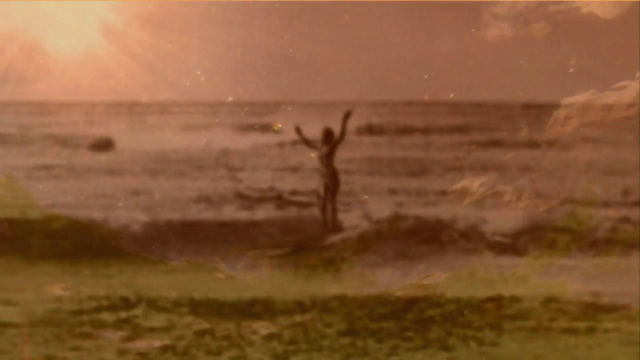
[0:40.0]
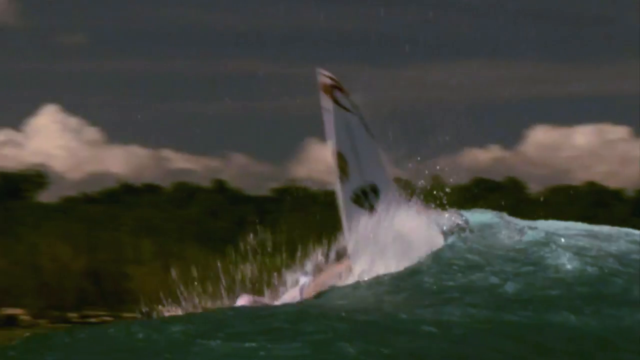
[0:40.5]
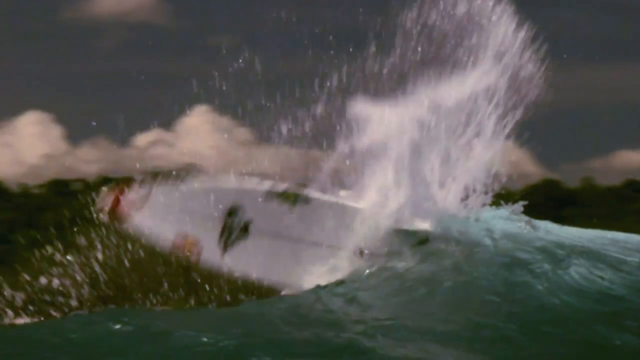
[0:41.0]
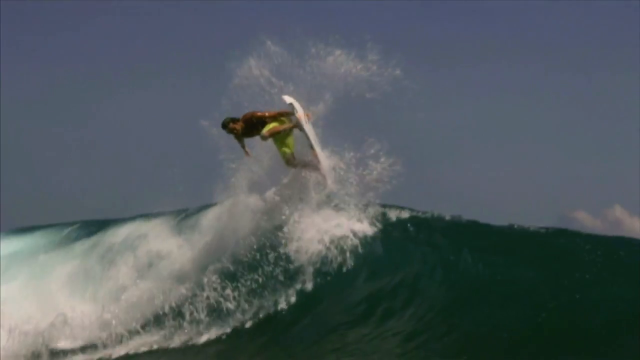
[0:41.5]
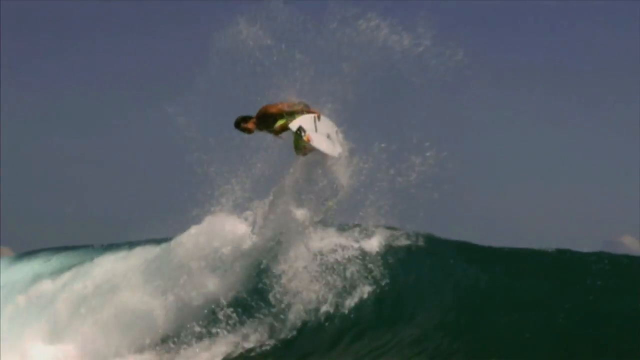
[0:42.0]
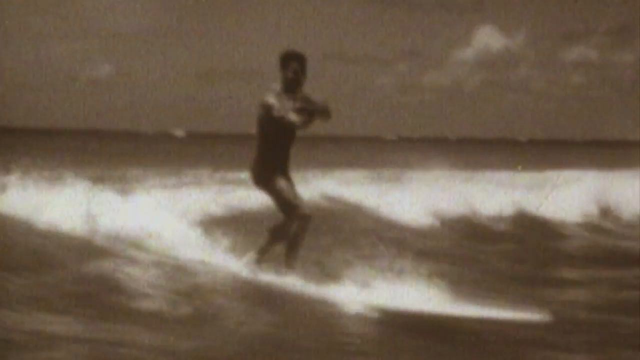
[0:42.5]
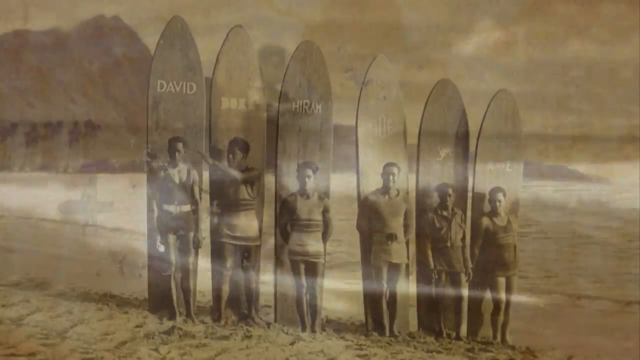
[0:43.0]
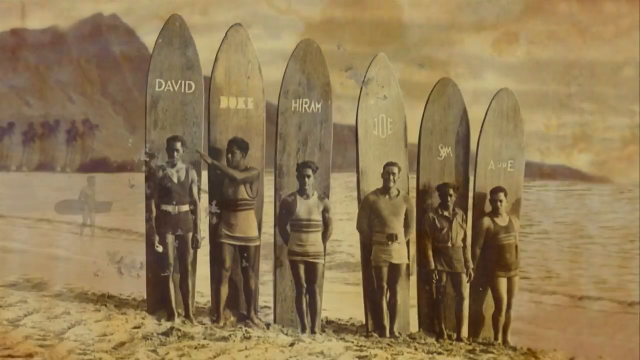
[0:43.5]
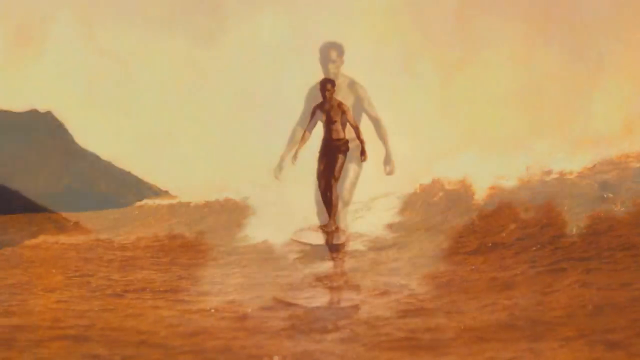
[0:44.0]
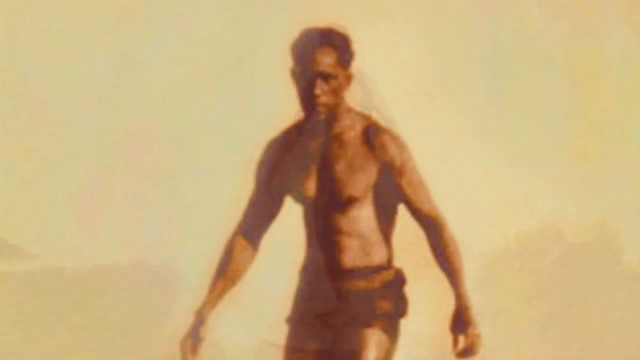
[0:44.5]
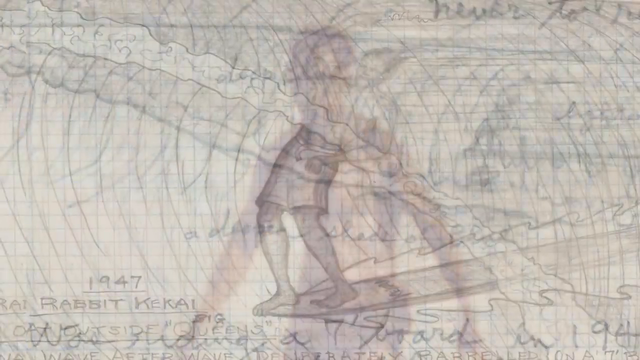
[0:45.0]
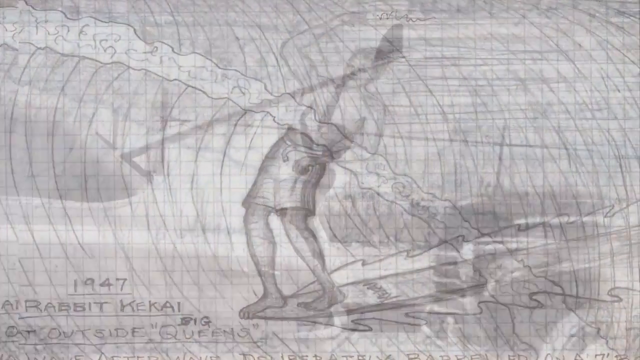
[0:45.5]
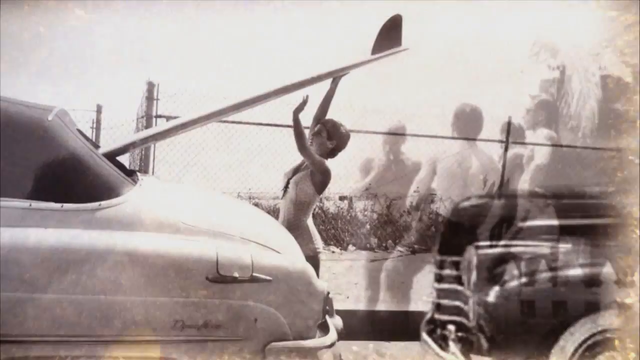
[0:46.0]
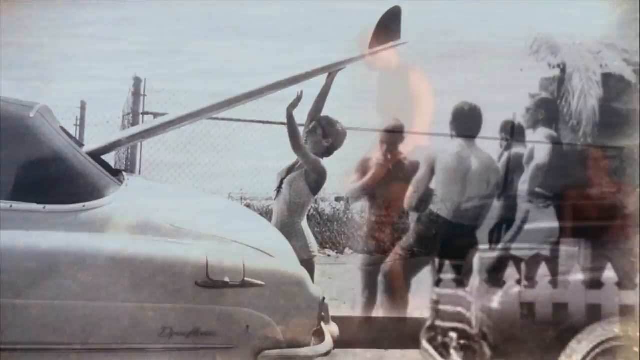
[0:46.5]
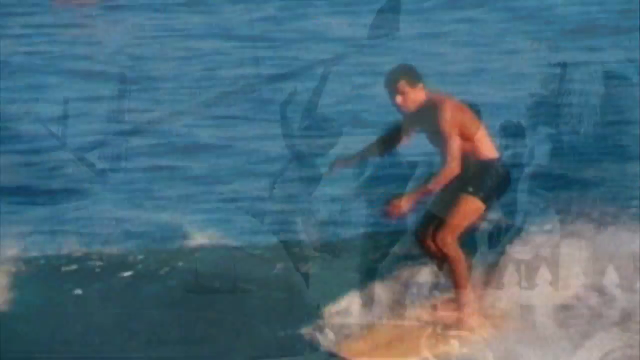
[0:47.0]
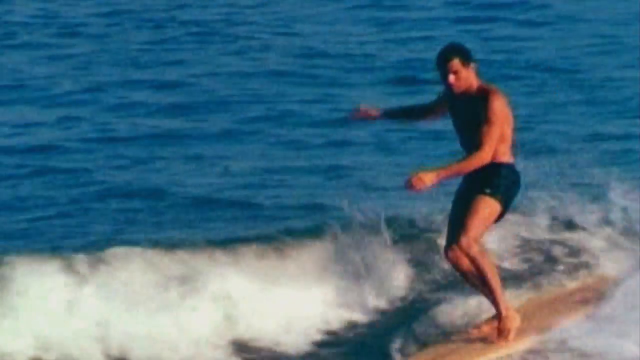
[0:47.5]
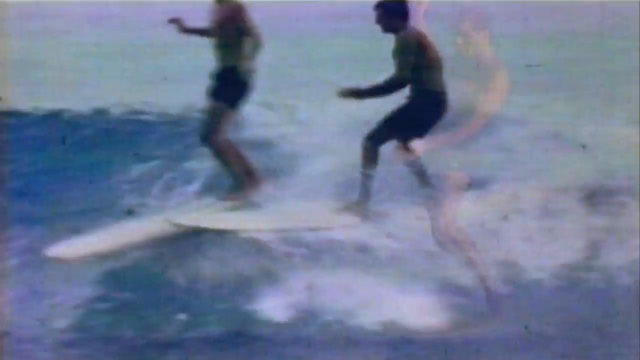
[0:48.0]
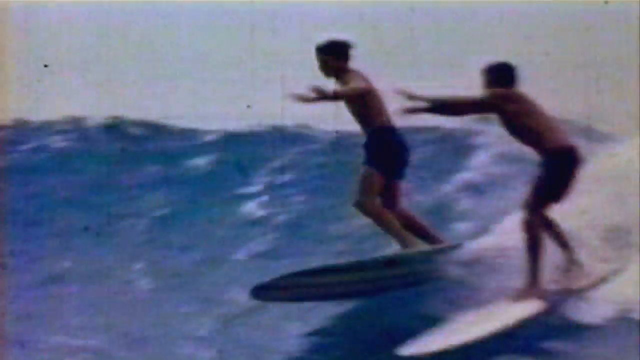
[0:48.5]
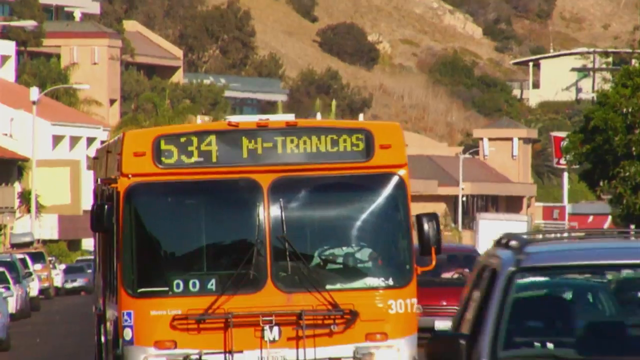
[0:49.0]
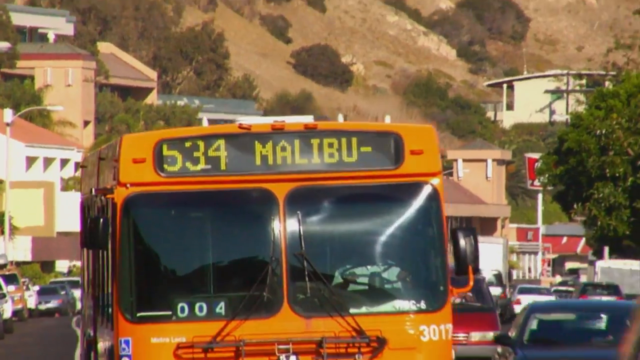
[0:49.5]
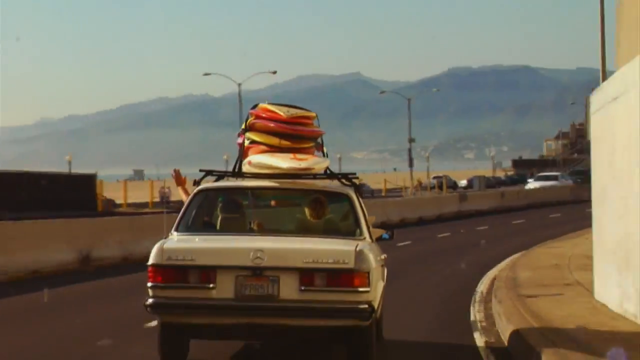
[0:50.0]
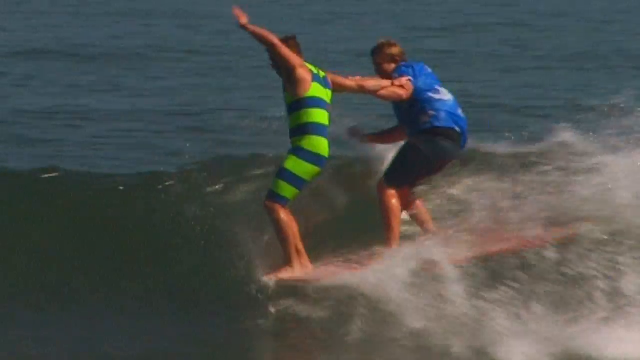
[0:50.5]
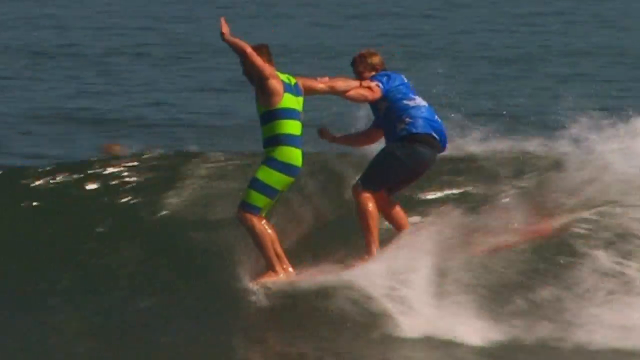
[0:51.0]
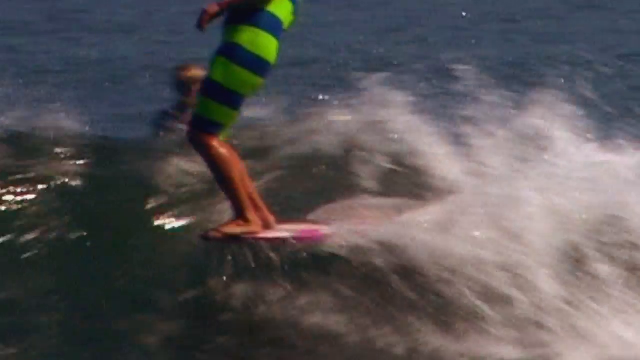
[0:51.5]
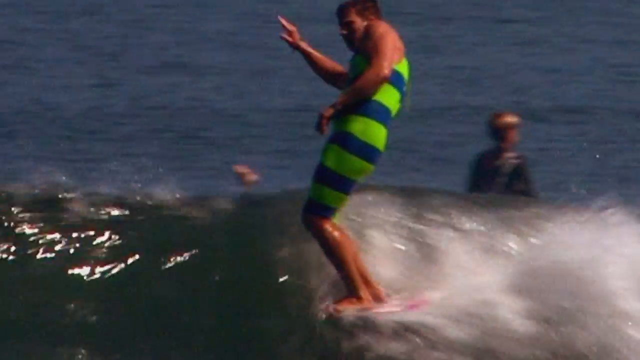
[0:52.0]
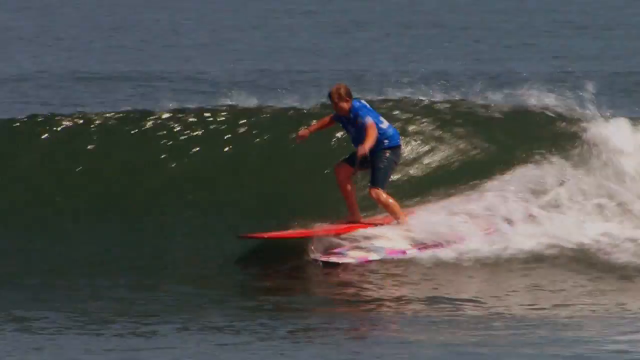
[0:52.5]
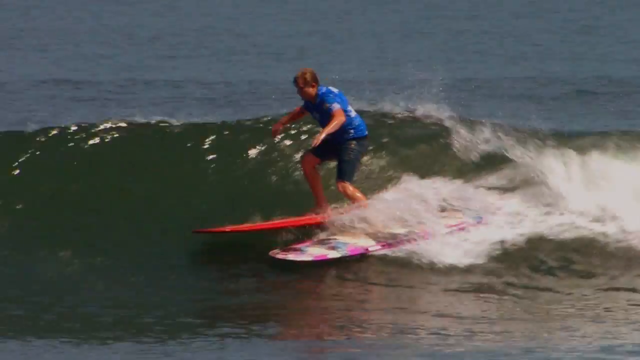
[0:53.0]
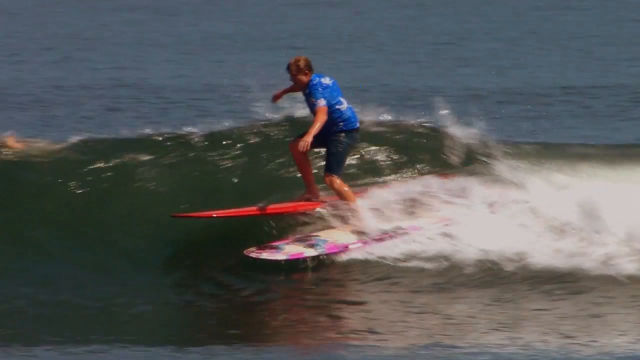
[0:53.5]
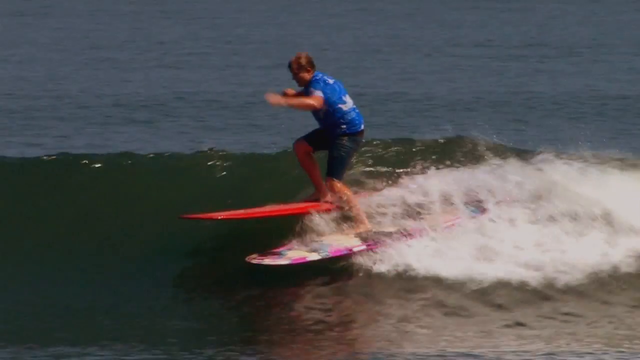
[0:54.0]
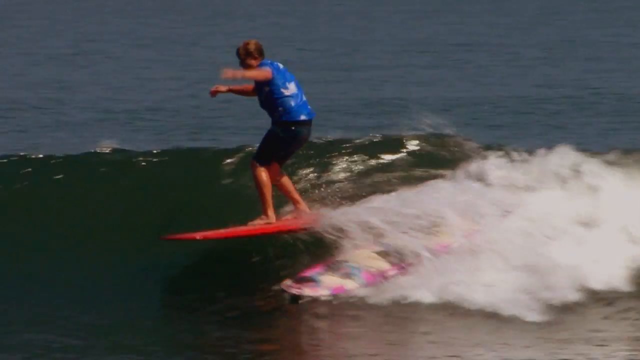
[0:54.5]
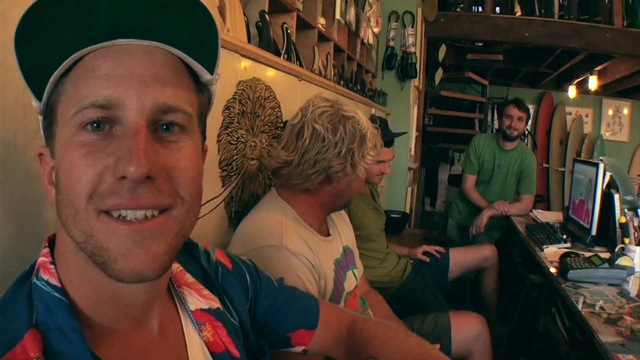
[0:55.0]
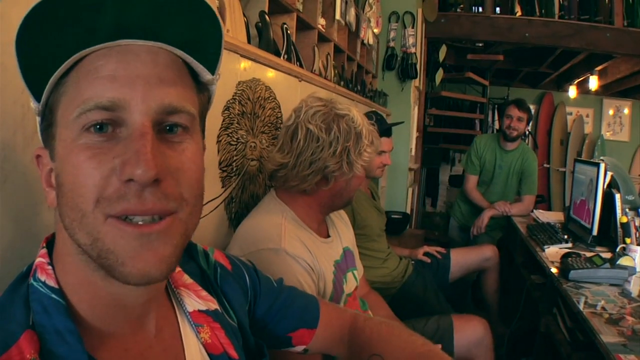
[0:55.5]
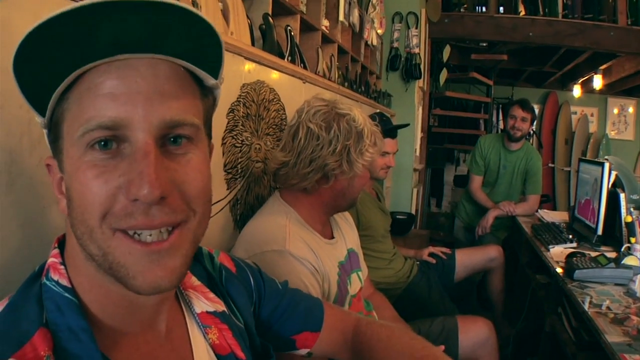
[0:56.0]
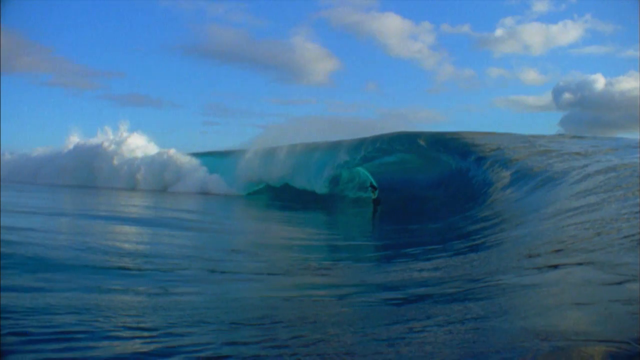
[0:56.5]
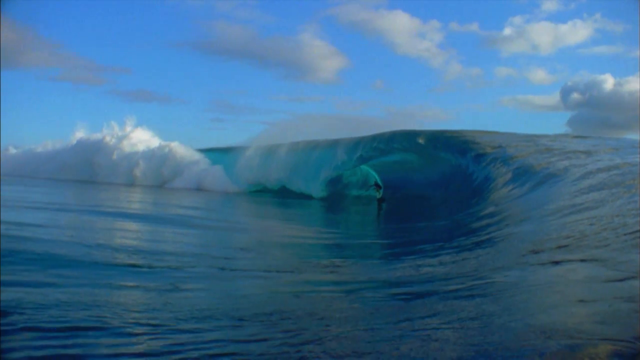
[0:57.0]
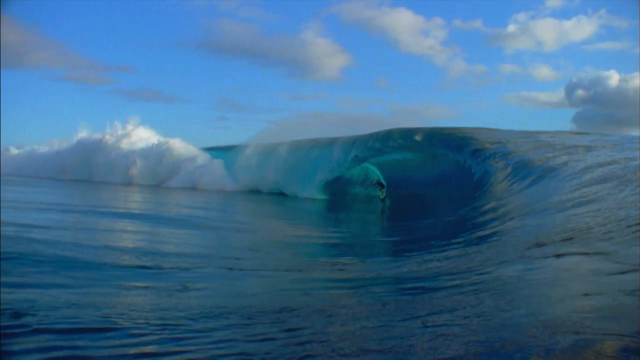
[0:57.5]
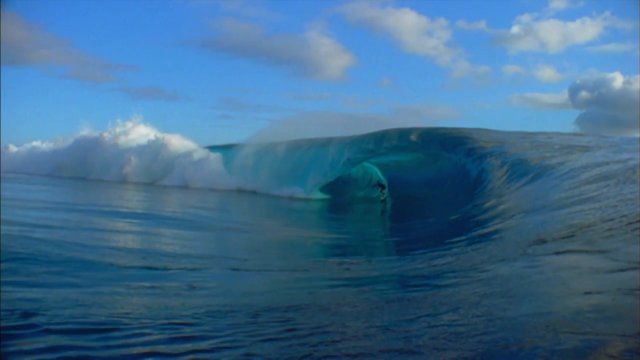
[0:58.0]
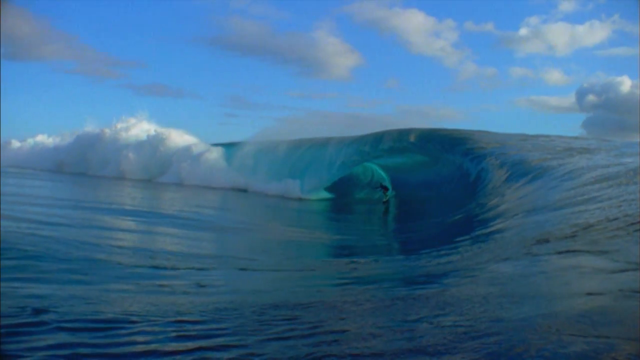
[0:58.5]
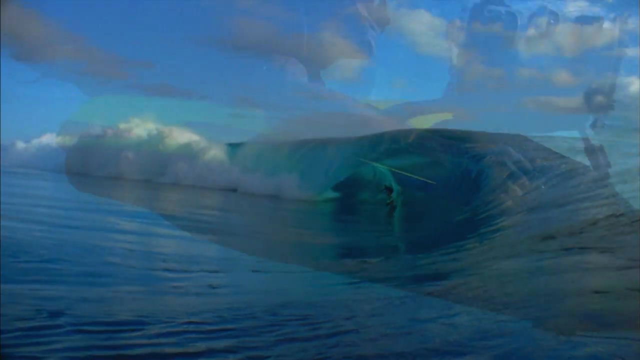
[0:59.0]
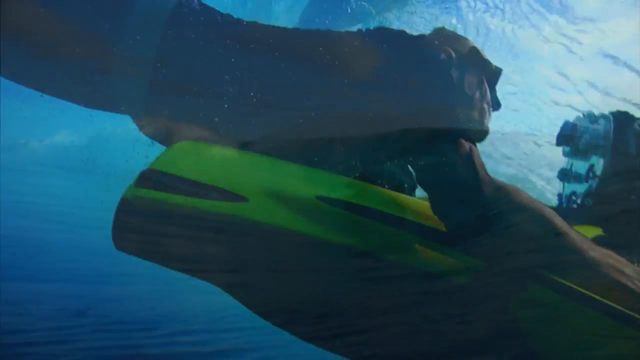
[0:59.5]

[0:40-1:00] A surfboard crashes out of the water, and old black-and-white clips of people surfing are intercut with modern clips of people surfing. An image shows six people stood with surfboards on their backs, their names on the surfboards: David, Noke, Hiram, Joe, Sam and A.E. A man surfs, followed by a drawing of someone surfing with the date 1947 at the bottom left. A woman puts a surfboard into the back of a car while a group of men stand around in the background; one is smoking and one has his hand on his hip, sort of trying to look cool. A more colourful image of surfing follows. A yellow bus bears the writing "534 Malibu", and more cars drive down the road with surfboards on their roofs. Two people surf holding each other's hands for balance; one wears a green and blue striped wetsuit and the other a blue shirt with blue shorts. In a more modern video, a man in the middle has highlighted blonde hair, two indistinguishable people on the right wear green t-shirts, and a person on the left with a sort of pentagon-shaped chin talks to the camera. The shot closes with a slow-motion video of a wave.